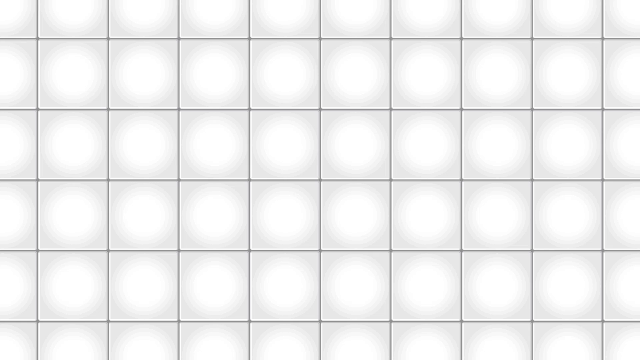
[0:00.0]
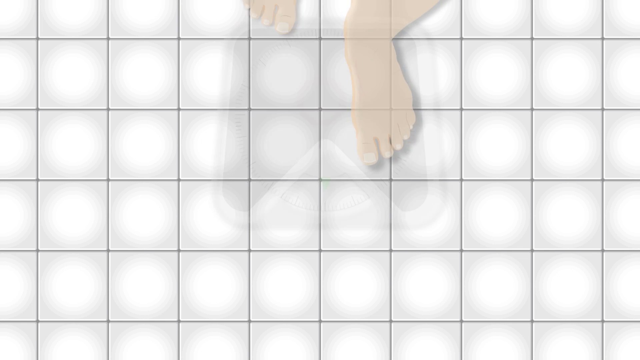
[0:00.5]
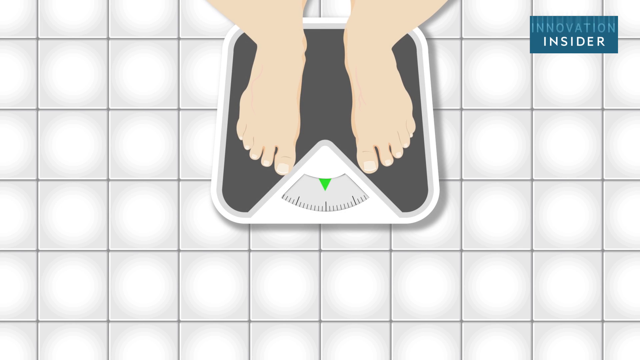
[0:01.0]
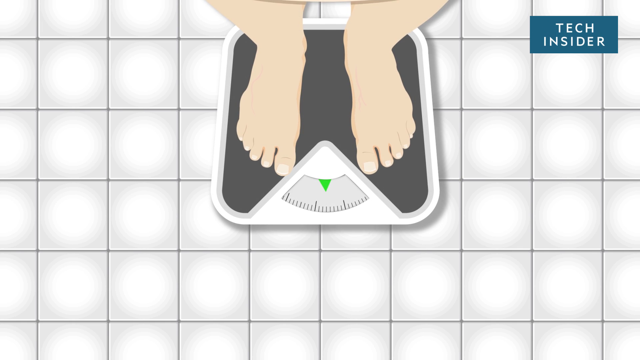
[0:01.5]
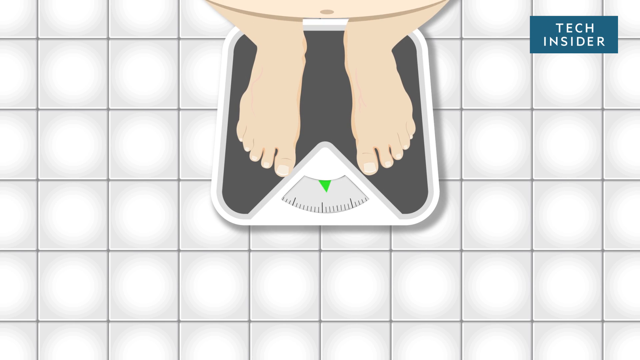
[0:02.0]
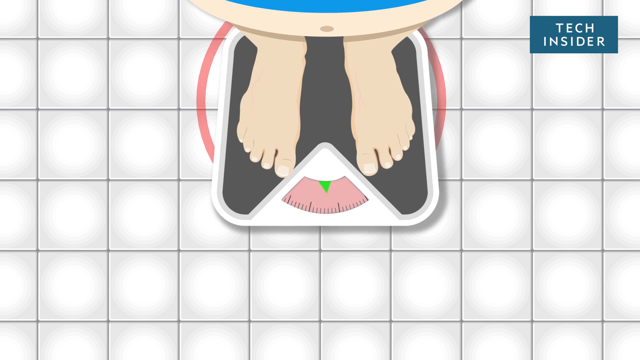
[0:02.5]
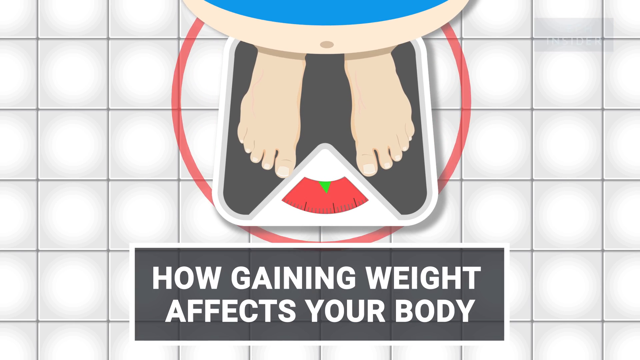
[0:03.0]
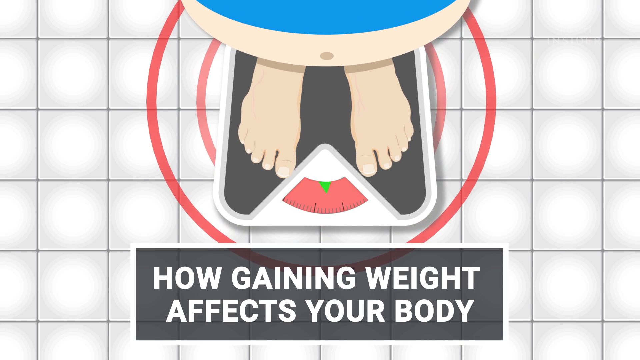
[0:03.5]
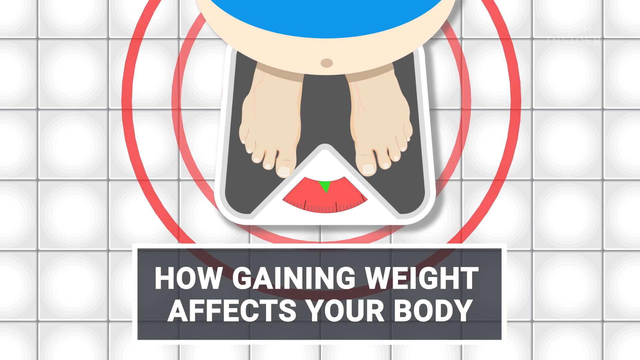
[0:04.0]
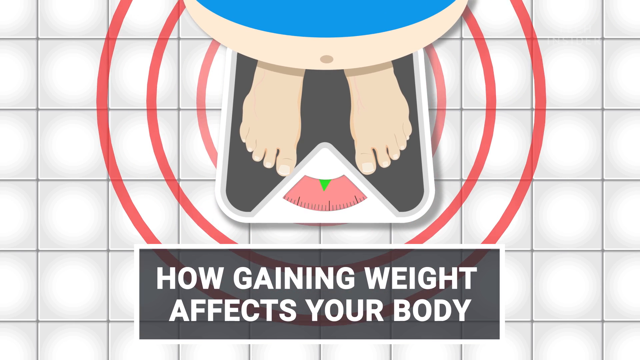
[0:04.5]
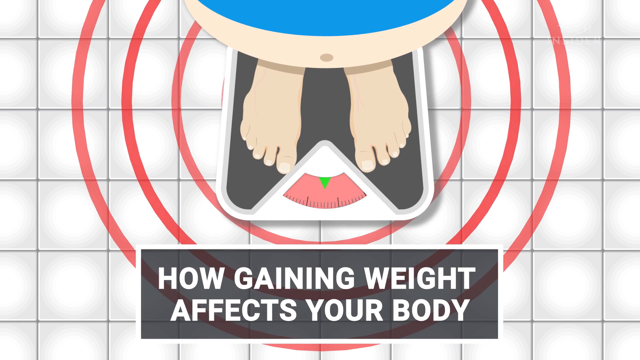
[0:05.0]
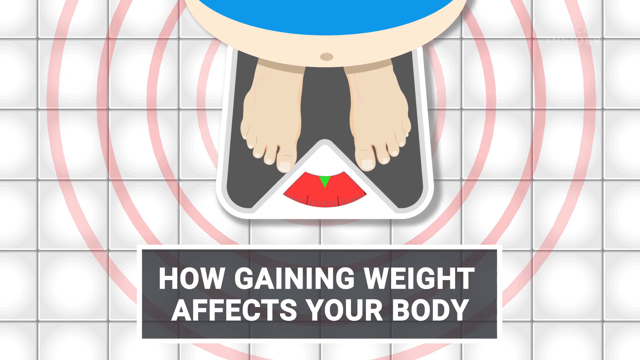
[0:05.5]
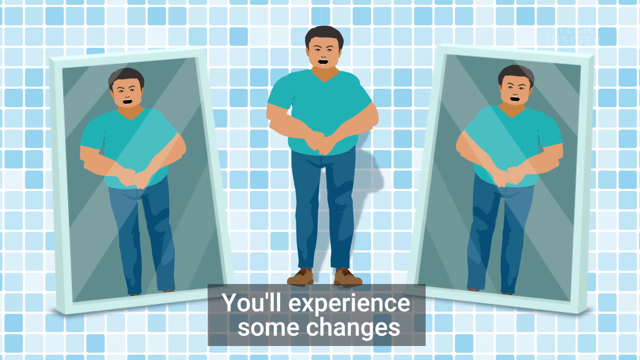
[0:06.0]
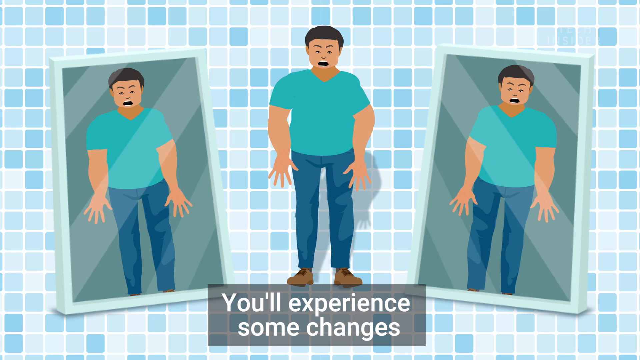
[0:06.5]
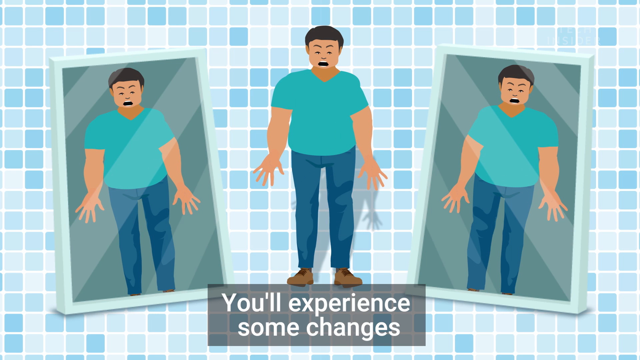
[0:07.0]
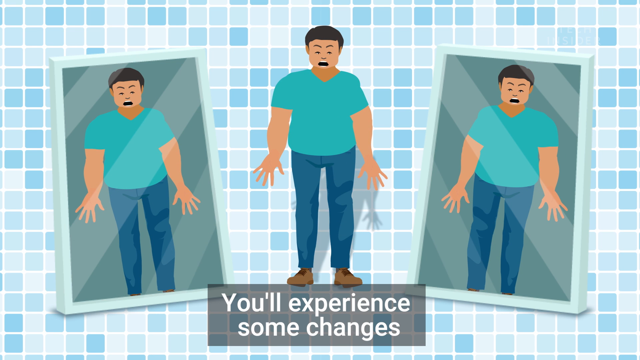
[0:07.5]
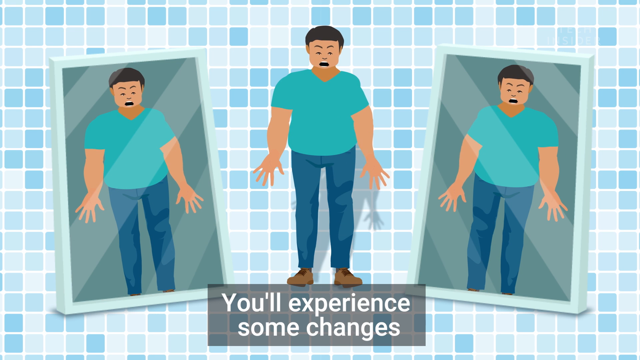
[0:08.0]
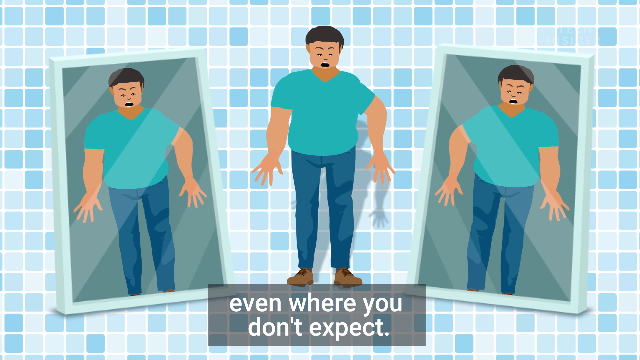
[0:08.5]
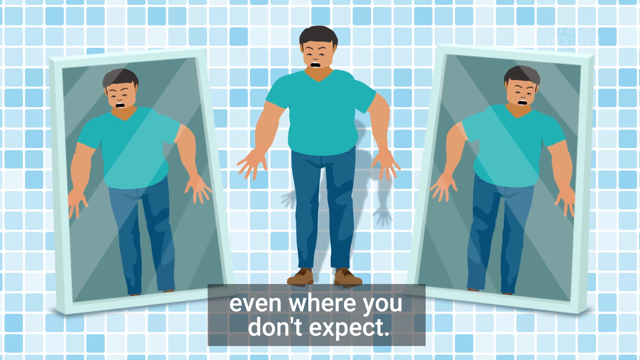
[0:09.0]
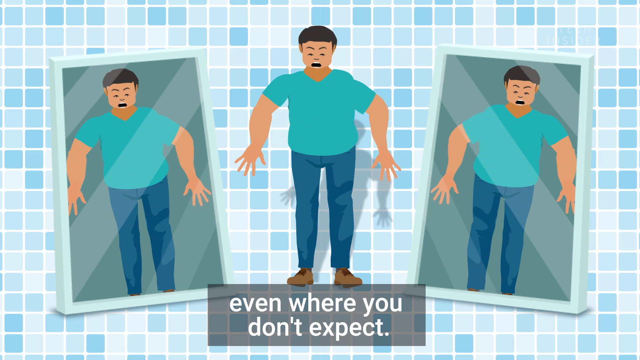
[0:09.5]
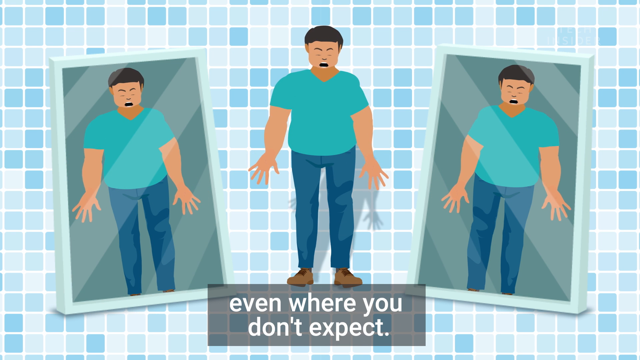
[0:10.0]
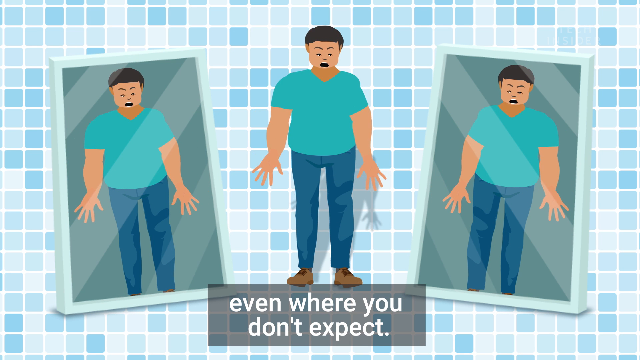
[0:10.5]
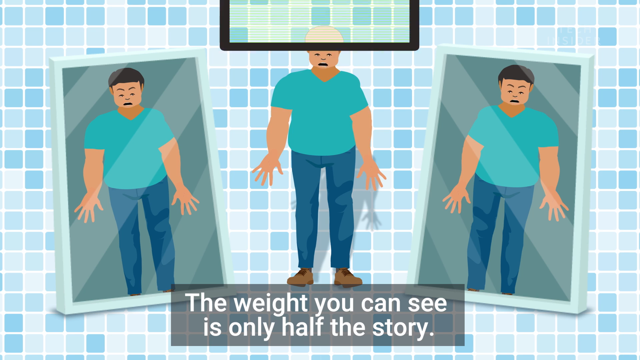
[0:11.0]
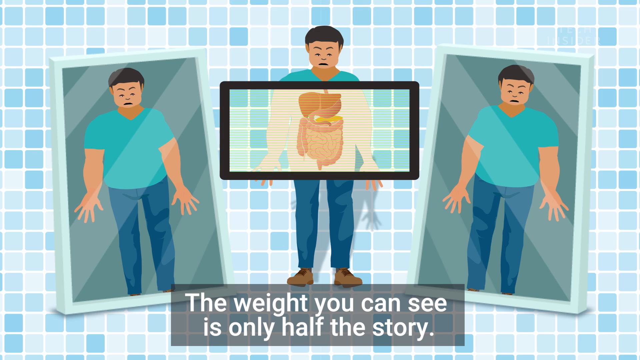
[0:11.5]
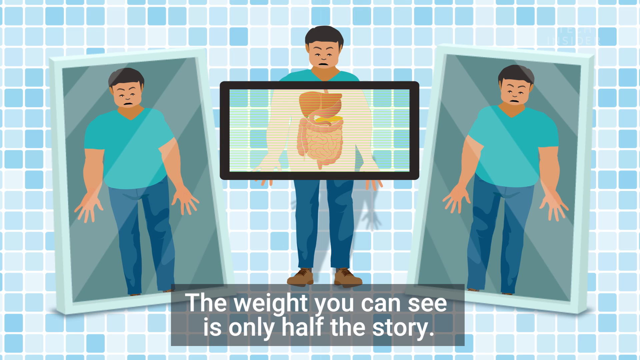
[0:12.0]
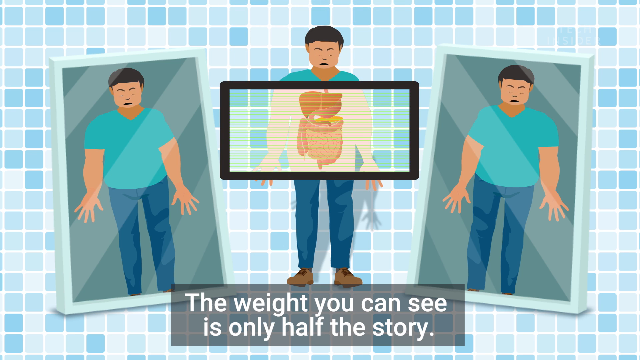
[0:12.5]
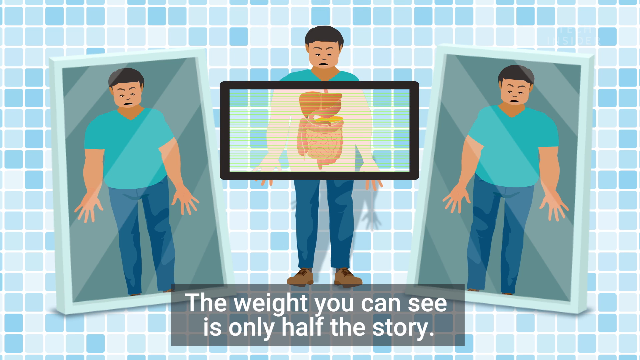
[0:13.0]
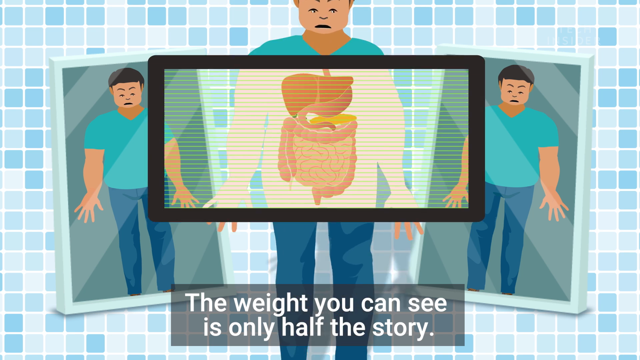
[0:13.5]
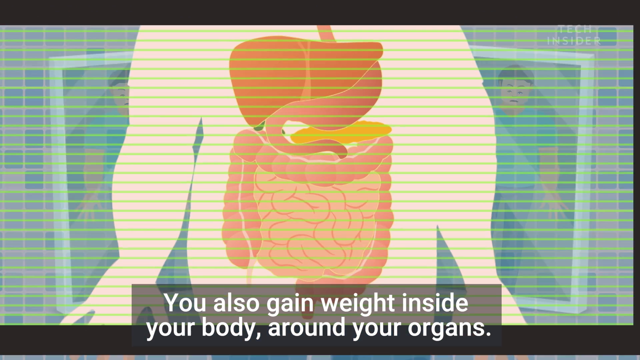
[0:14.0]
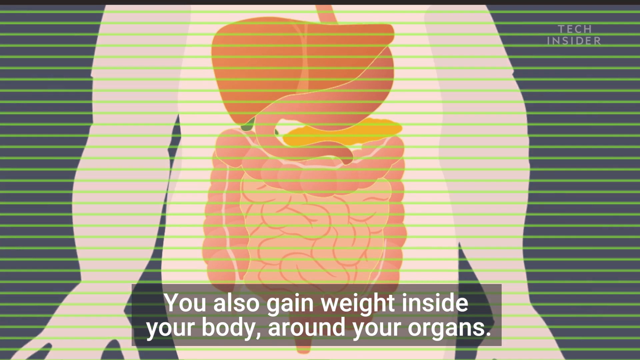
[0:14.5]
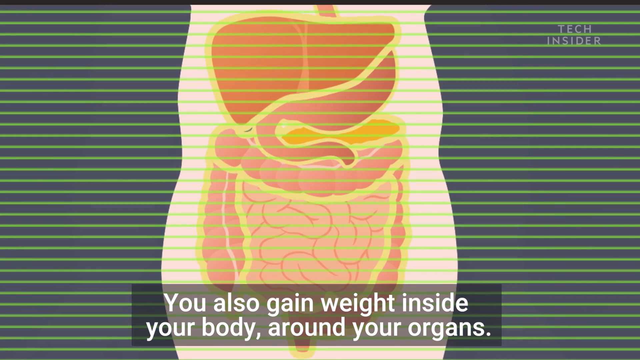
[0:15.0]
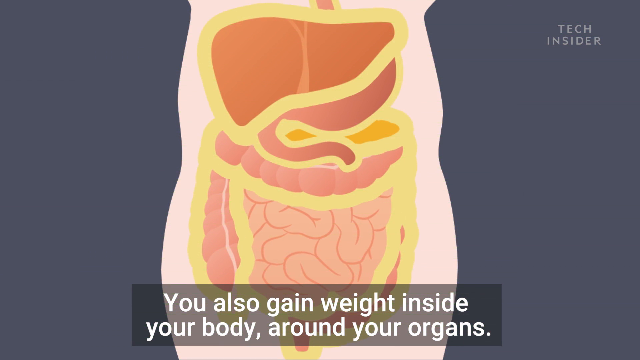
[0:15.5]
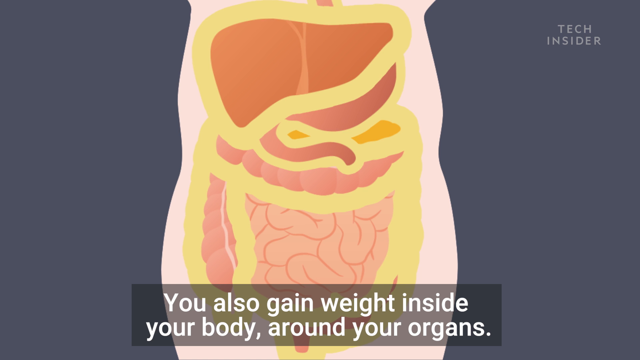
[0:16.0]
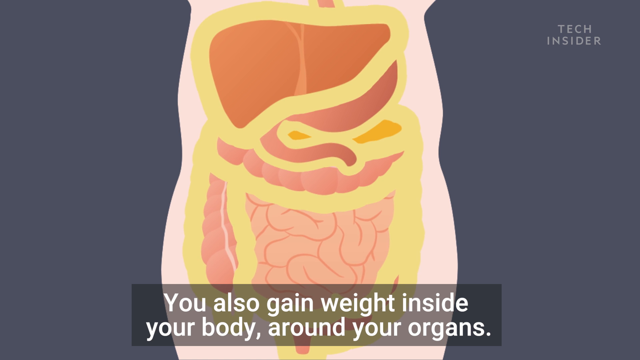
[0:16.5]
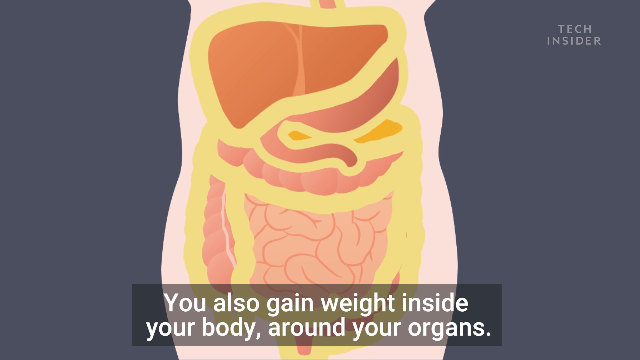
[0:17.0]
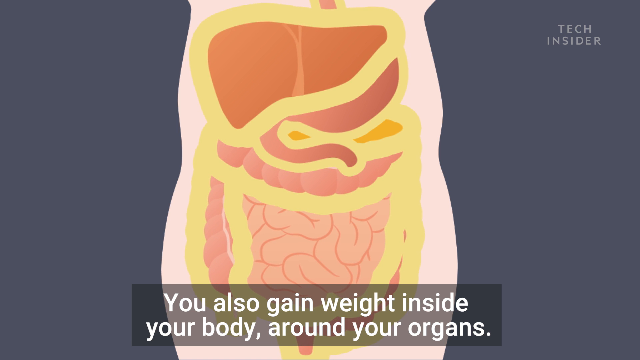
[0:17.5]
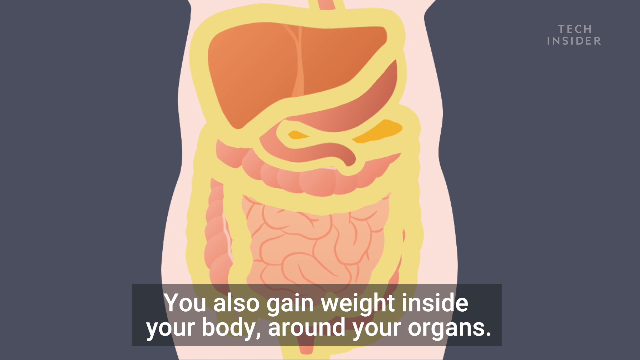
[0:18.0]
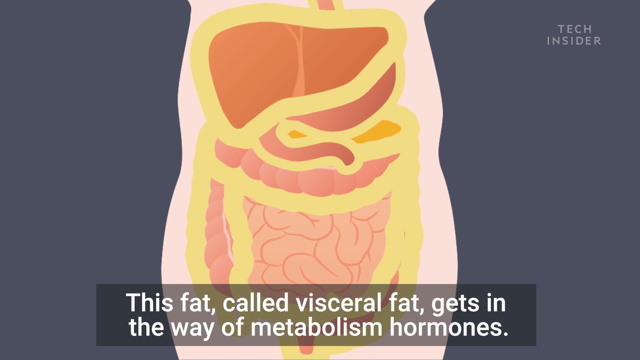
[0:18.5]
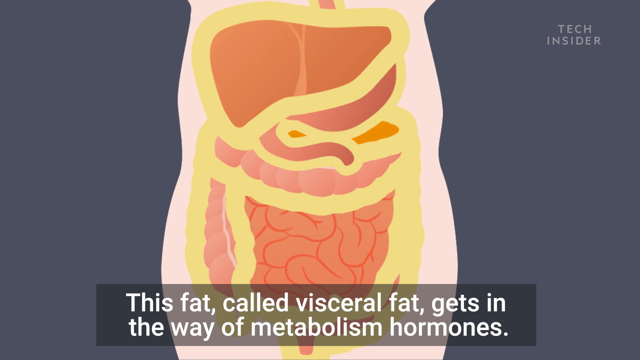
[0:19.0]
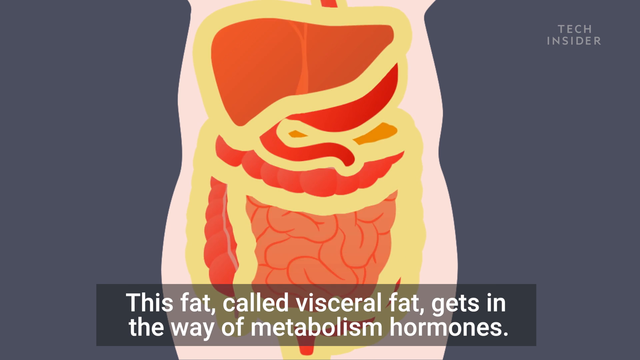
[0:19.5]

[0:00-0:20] The screen shows a floor covered in what look like floor tiles, with a weighing scale in the middle. A pair of feet steps onto the scale, and text in the upper right-hand corner says "Video Insider." As the feet step on, the scale tips and its numbers turn red, while red circles seem to radiate from underneath it. The text underneath reads "How gaining weight affects your body." The scene transitions to a cartoon of a slightly overweight man with black hair, wearing a blue shirt, dark blue pants and brown shoes; his facial expression looks surprised. He clenches his hands together and then puts them down. Two full-size mirrors are on both sides of him, and his reflection appears in both. While he looks down, the text reads "You'll experience some changes, even where you don't expect." A sort of black rectangular shape then falls down; it looks like an x-ray machine or x-ray frame, and inside it is an x-ray representation of the man's internal organs. The text at the bottom reads "The weight you can see is only half the story." The camera zooms in to the inside of the x-ray, showing the internal organs, with the text "You also gain weight inside your body around your organs." Over the representation of the internal organs, the text then reads "This fat, called visceral fat, gets in the way of metabolism hormones."